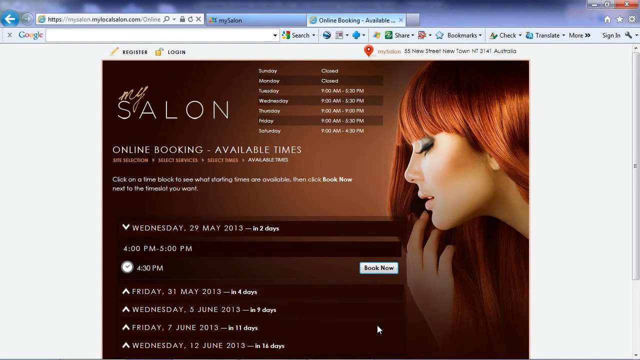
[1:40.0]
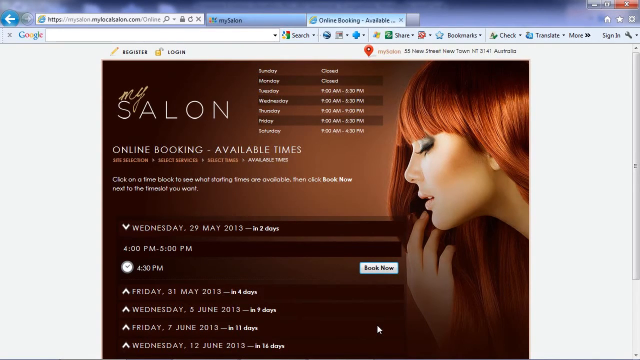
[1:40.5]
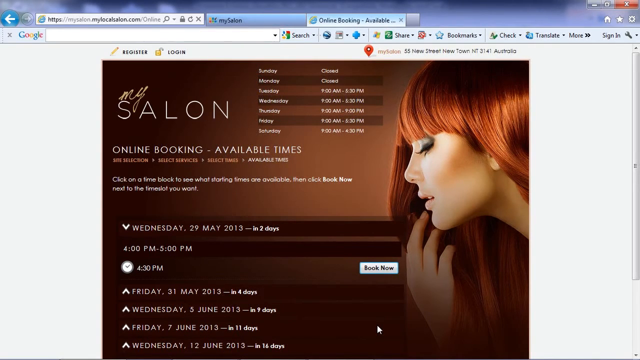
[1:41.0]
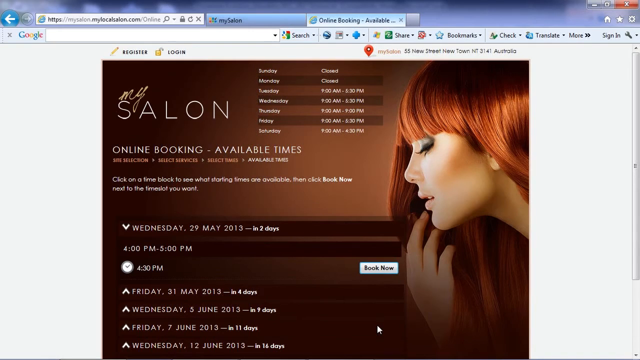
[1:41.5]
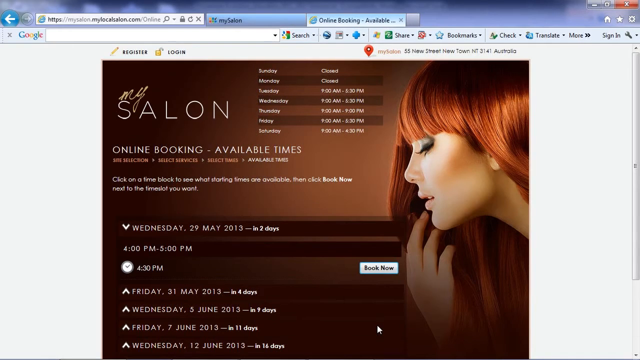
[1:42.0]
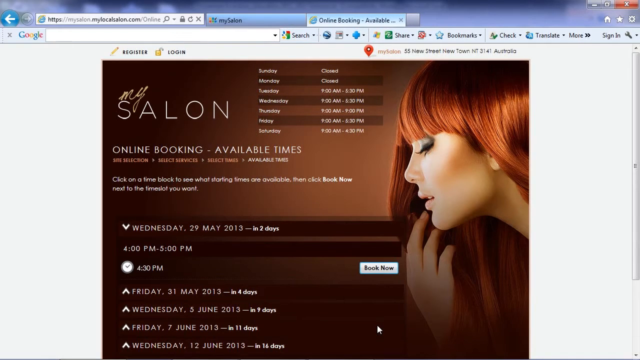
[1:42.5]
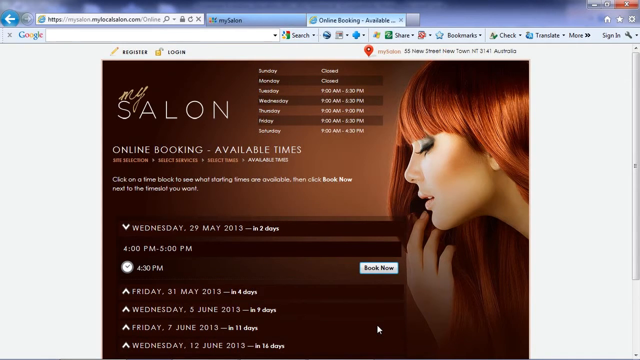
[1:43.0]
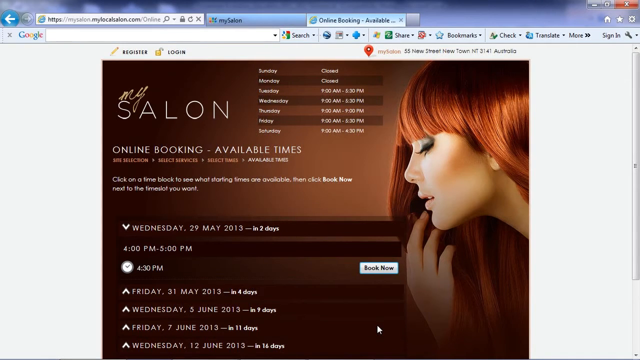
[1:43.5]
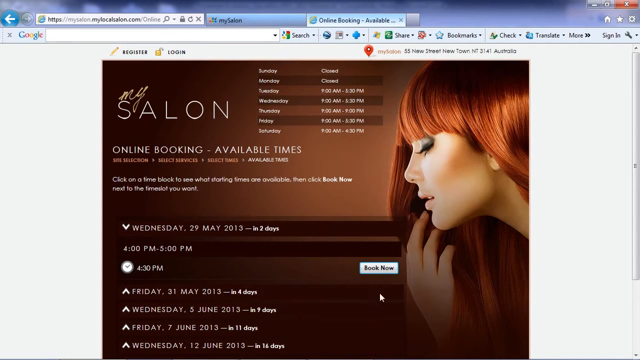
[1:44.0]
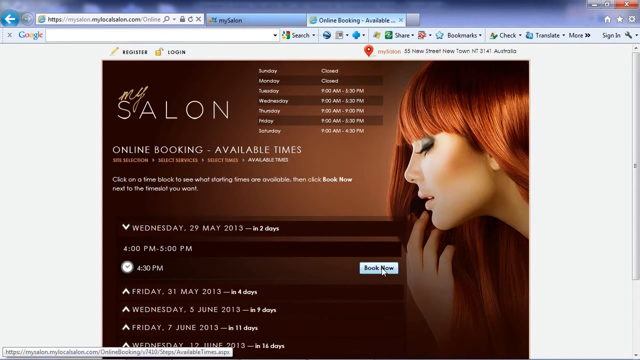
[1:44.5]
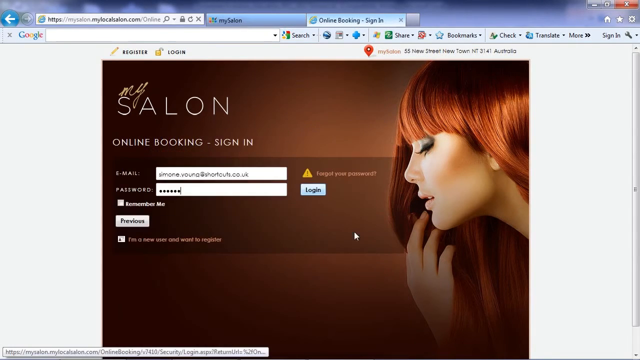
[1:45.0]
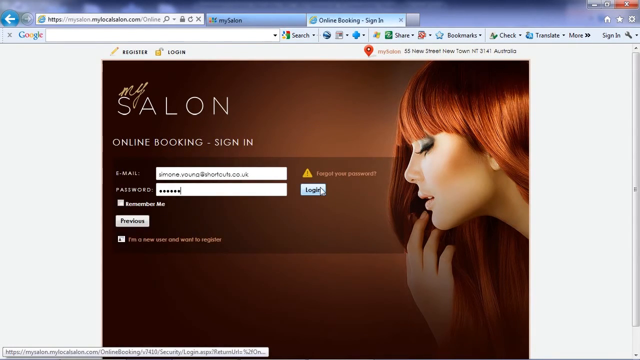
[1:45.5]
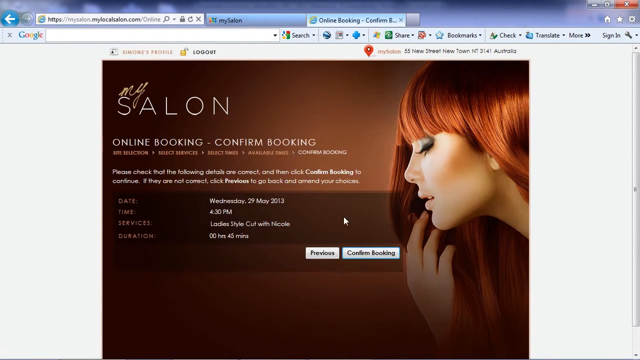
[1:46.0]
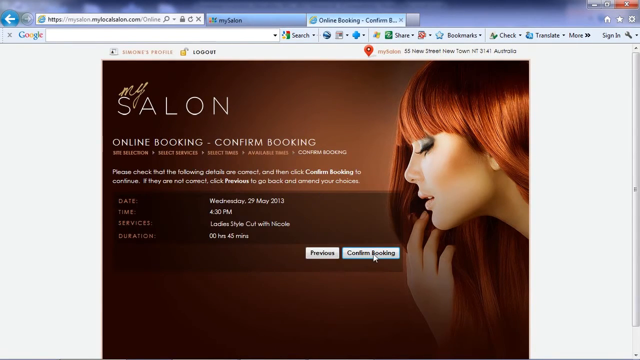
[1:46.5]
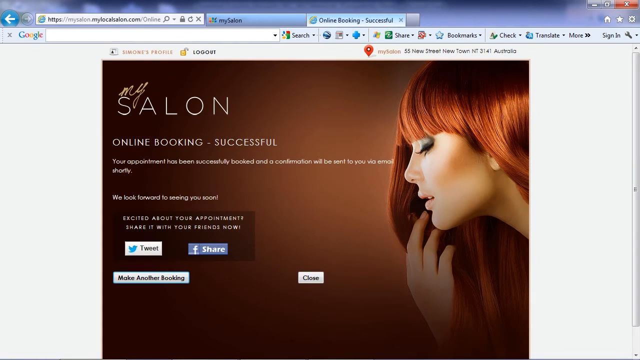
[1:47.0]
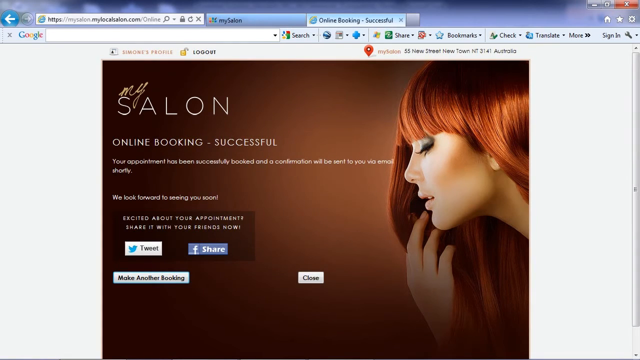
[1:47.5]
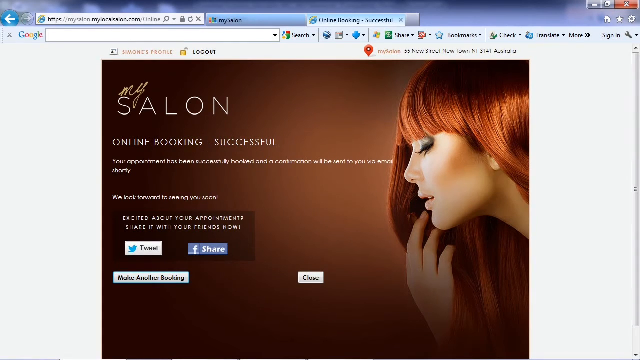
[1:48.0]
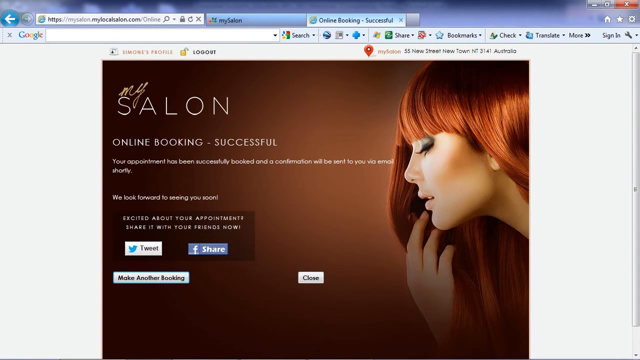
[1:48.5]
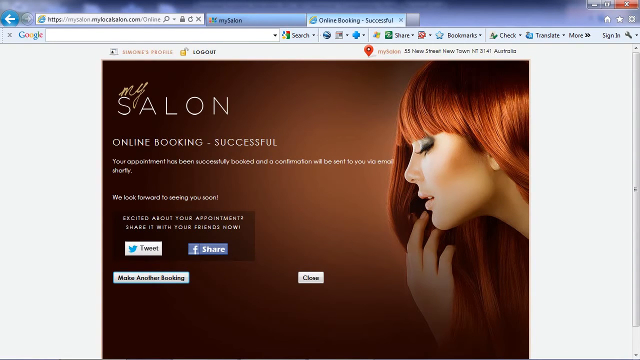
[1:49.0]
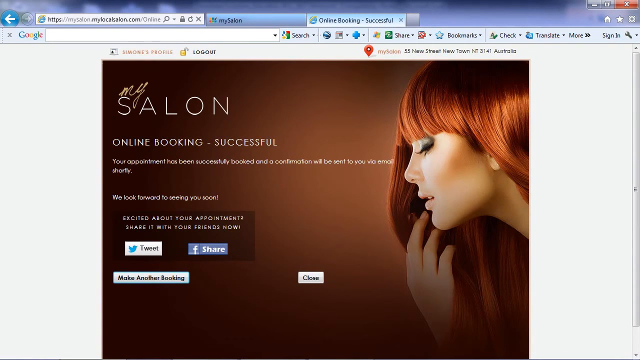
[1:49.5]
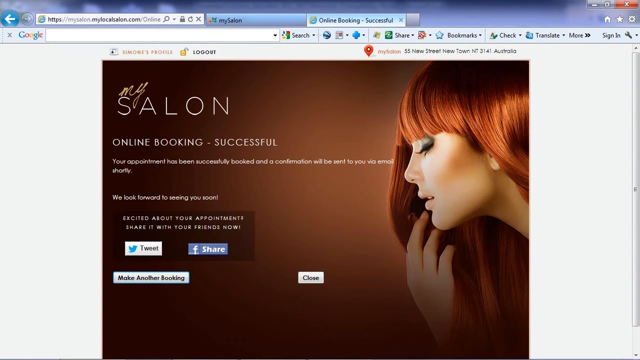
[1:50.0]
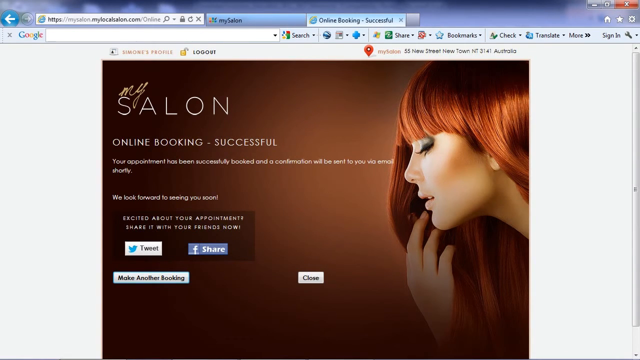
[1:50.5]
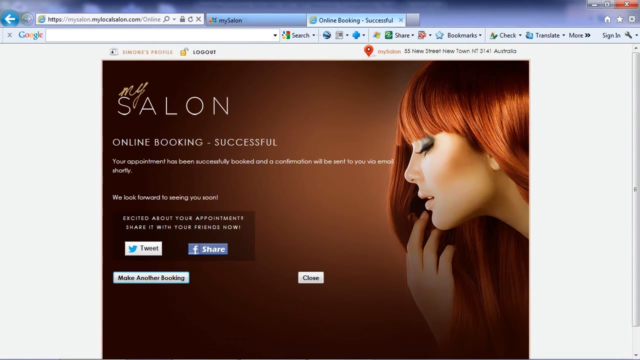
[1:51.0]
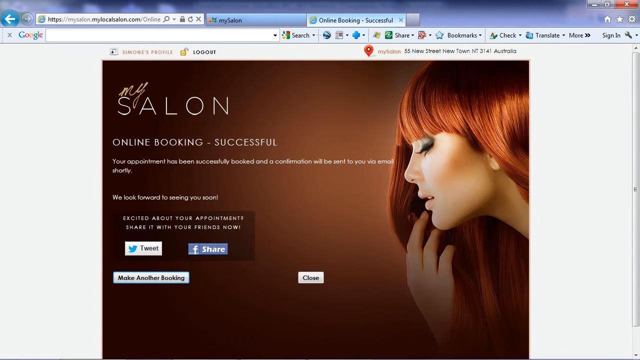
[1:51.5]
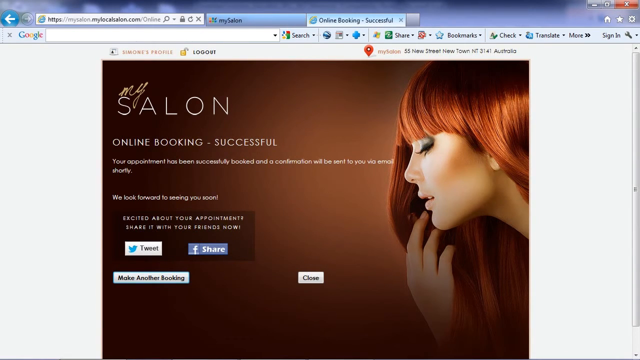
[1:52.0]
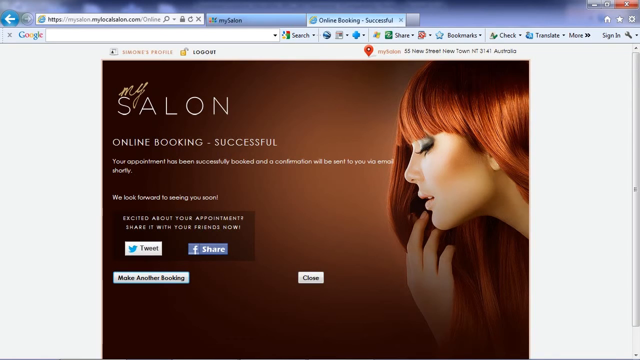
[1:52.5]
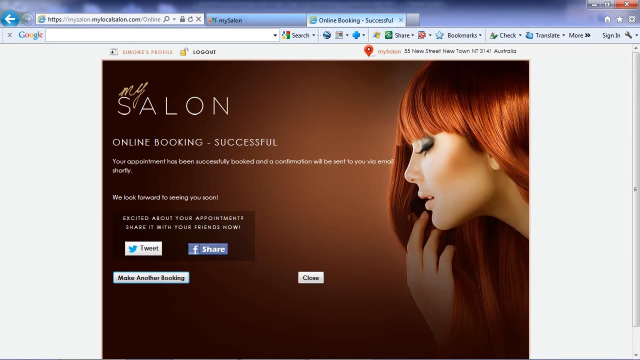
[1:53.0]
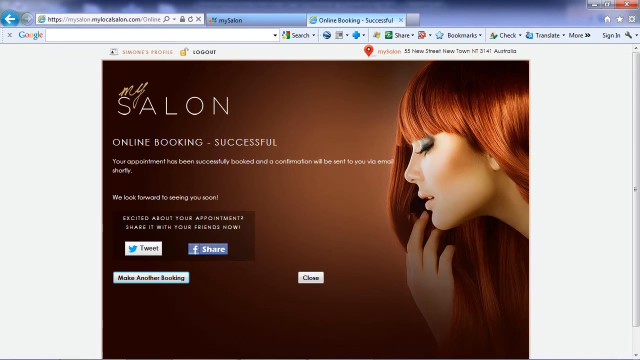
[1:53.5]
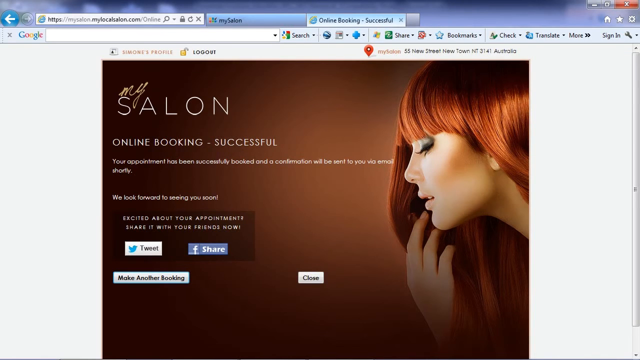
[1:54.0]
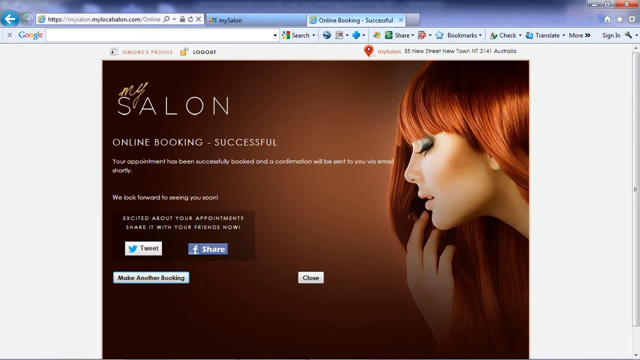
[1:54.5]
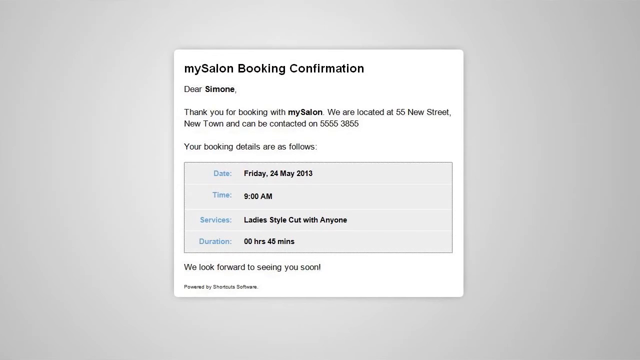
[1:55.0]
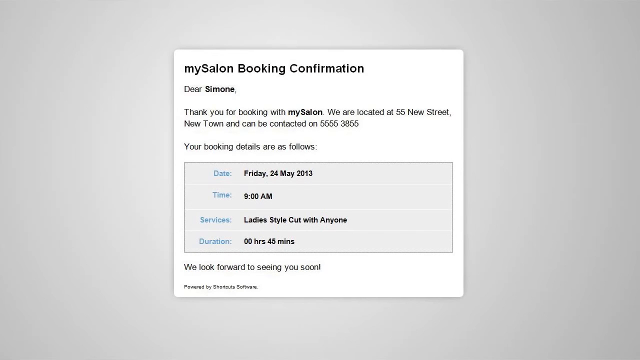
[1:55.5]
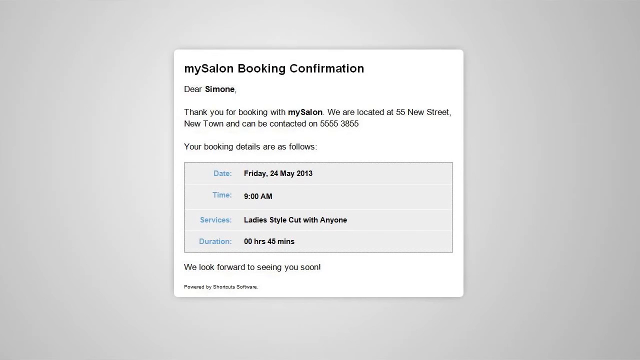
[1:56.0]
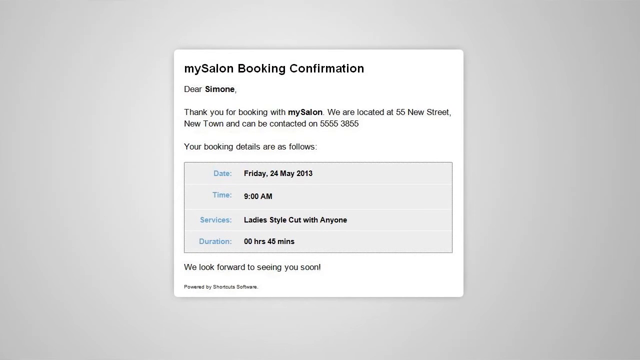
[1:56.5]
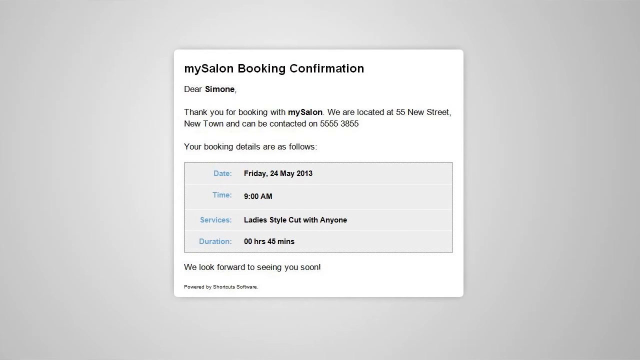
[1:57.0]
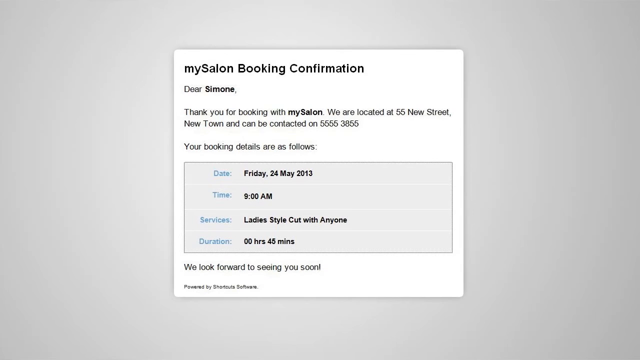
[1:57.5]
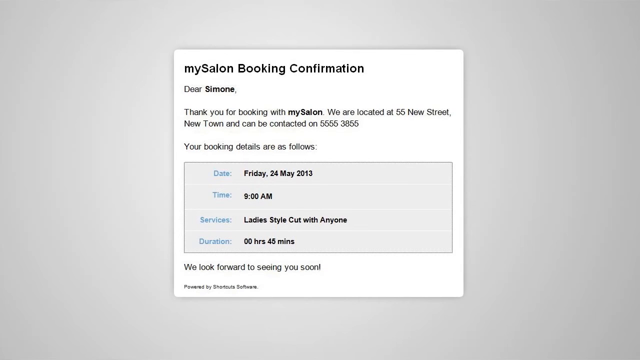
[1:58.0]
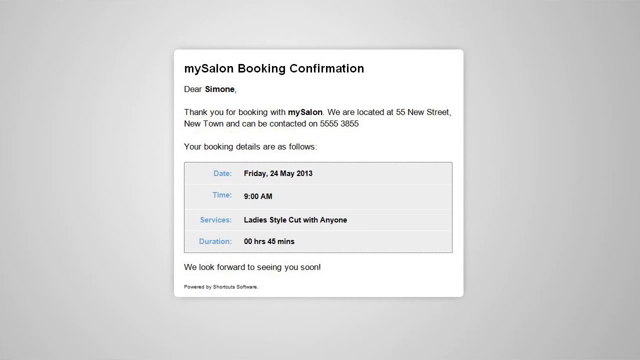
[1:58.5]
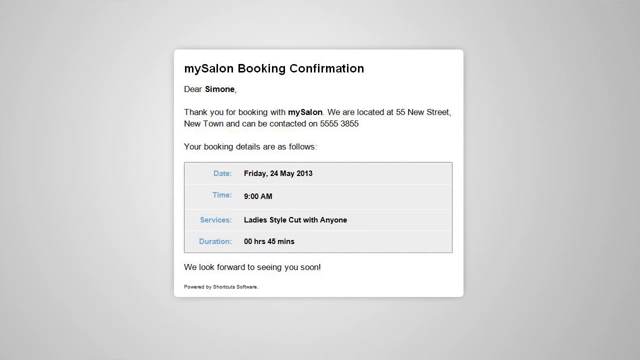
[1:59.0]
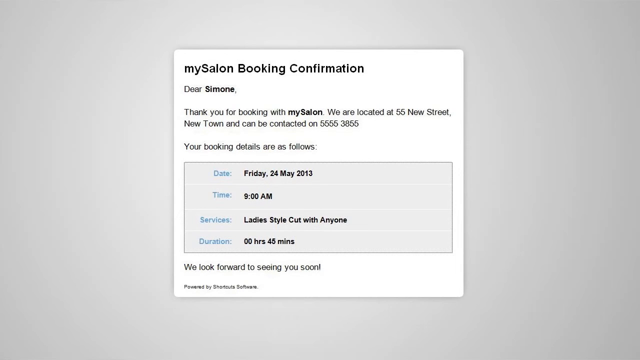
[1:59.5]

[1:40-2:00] The salon's website shows how to book time slots: picking the person to make an appointment with, then booking and confirming. It shows which time slots are available and which are taken, to avoid double booking.